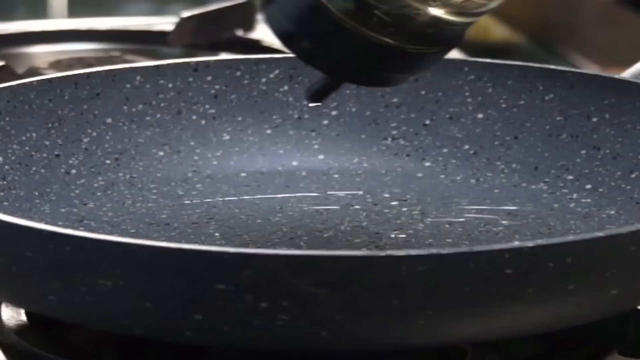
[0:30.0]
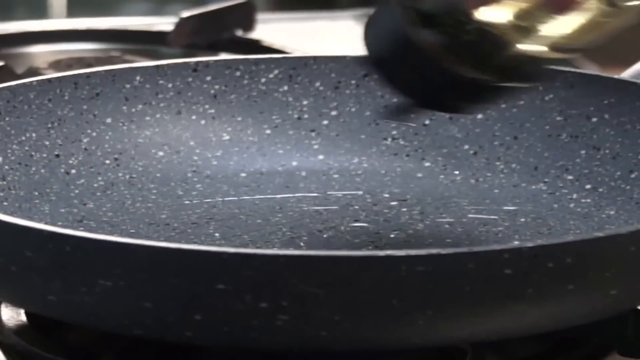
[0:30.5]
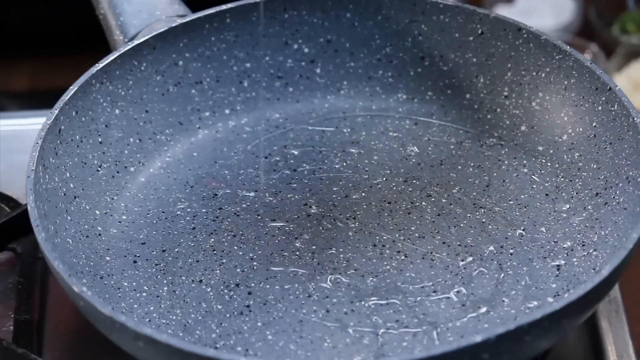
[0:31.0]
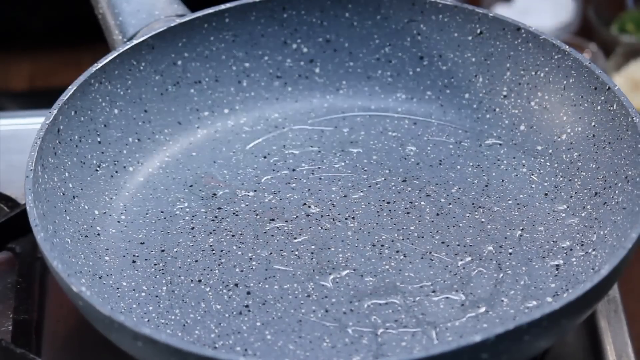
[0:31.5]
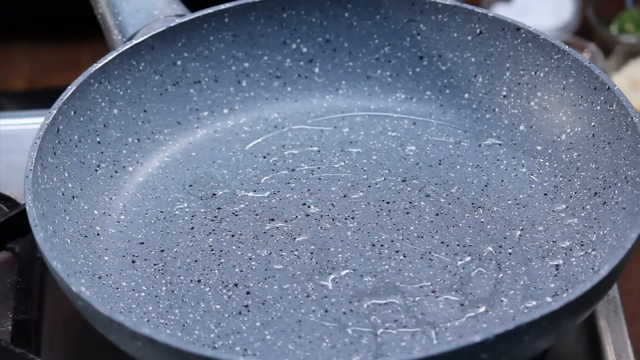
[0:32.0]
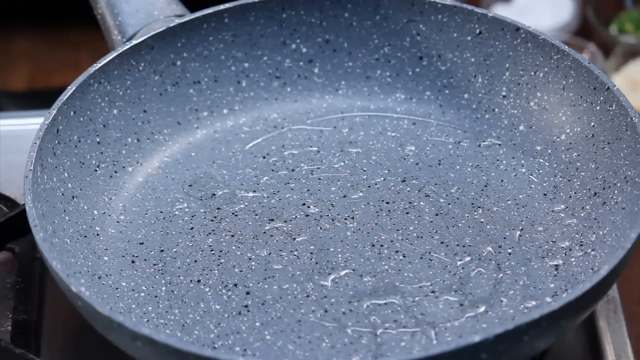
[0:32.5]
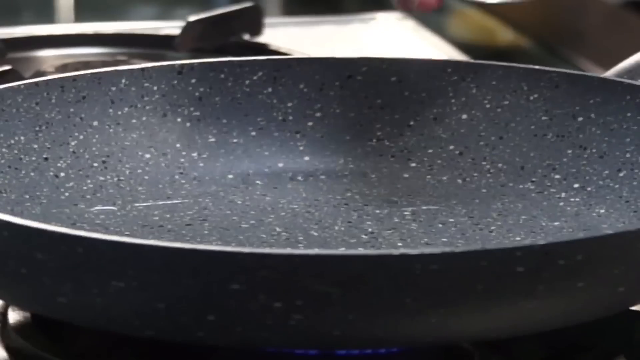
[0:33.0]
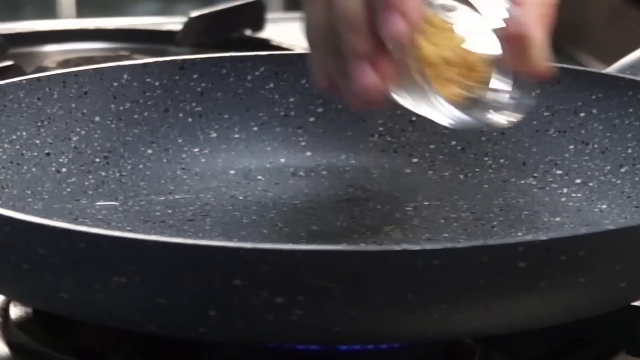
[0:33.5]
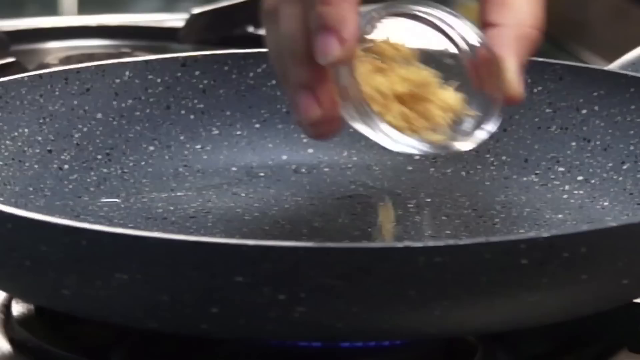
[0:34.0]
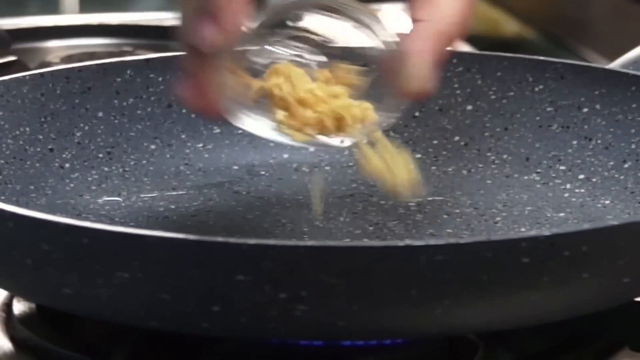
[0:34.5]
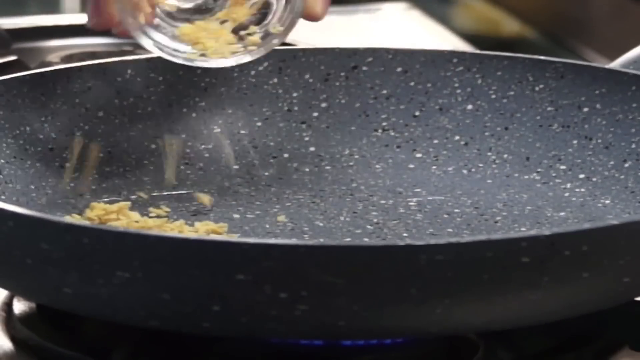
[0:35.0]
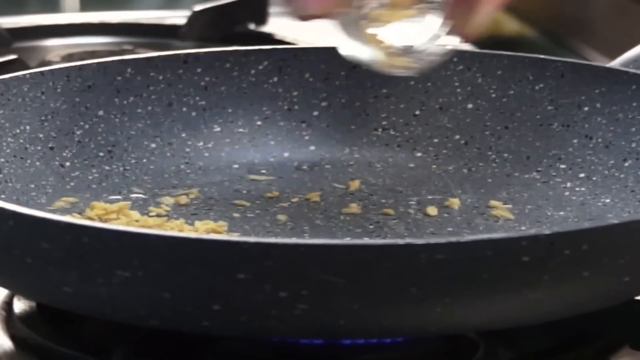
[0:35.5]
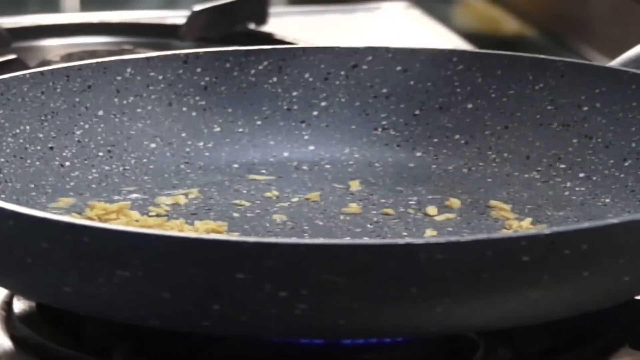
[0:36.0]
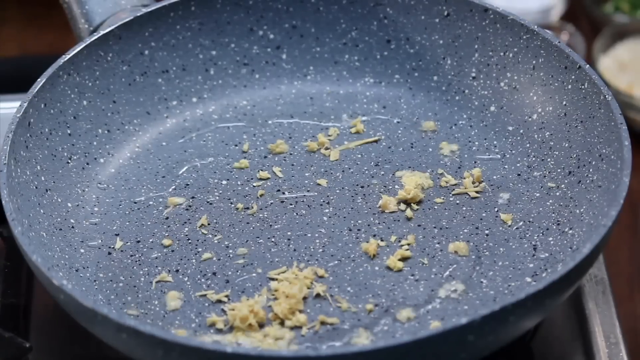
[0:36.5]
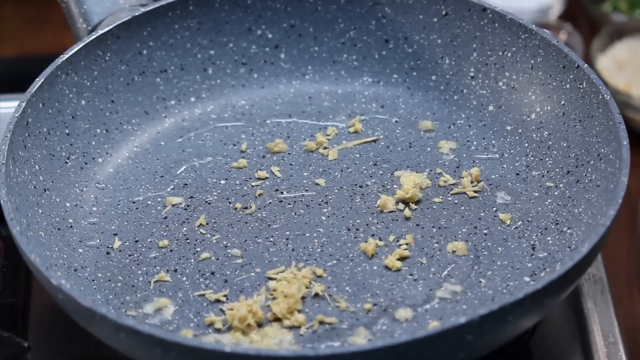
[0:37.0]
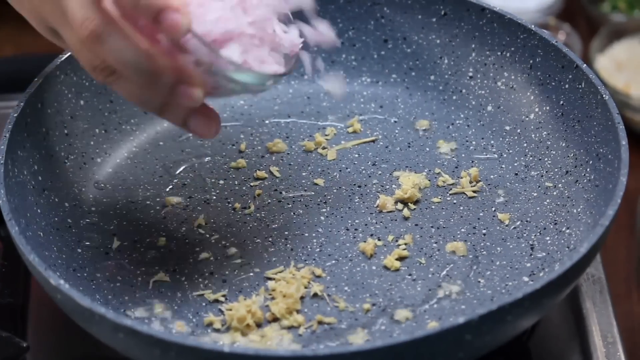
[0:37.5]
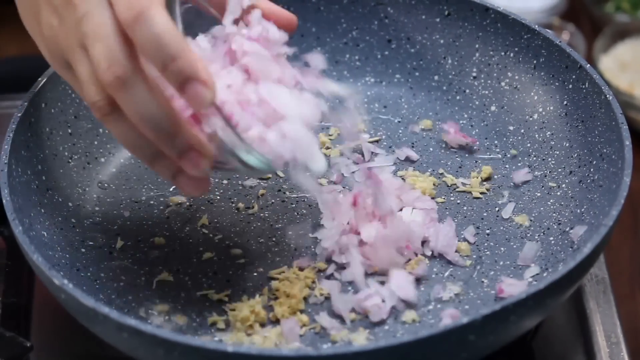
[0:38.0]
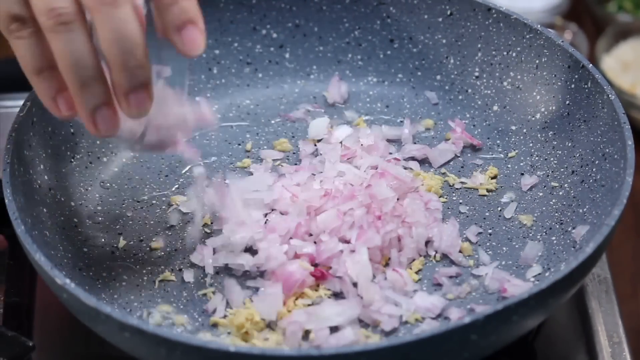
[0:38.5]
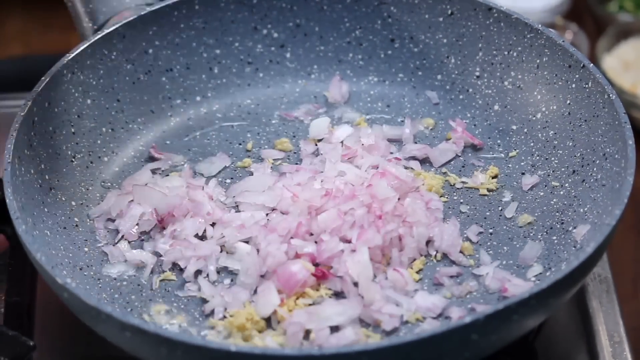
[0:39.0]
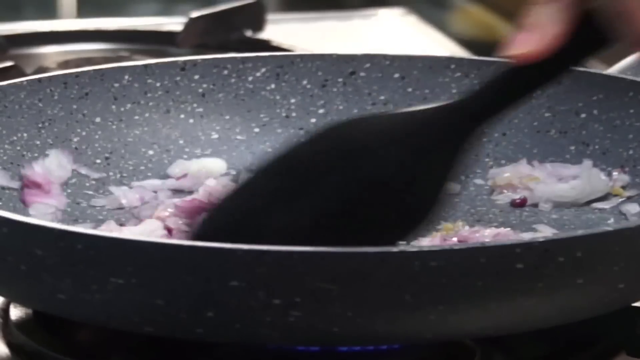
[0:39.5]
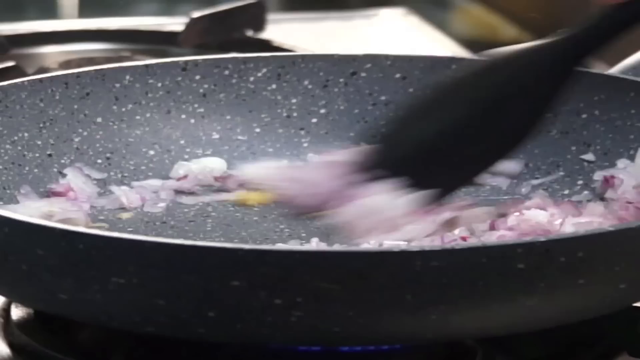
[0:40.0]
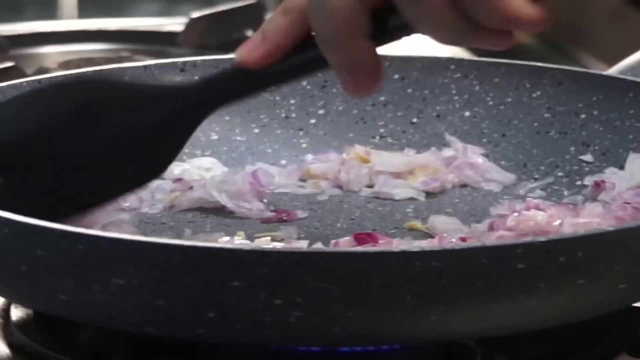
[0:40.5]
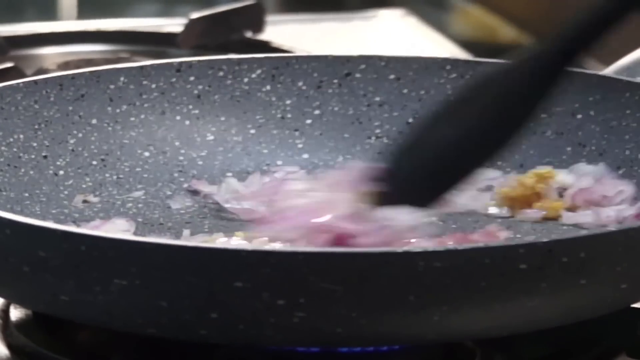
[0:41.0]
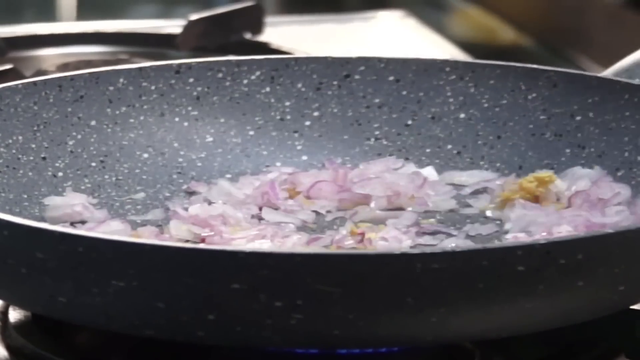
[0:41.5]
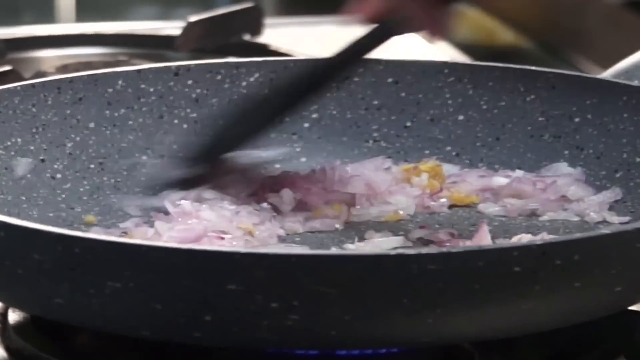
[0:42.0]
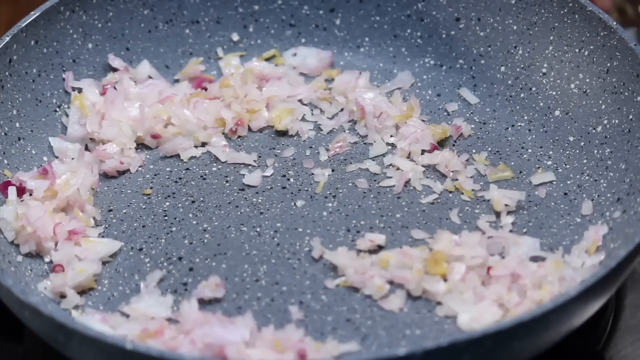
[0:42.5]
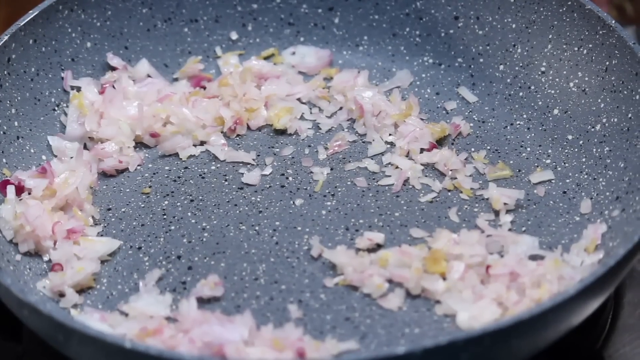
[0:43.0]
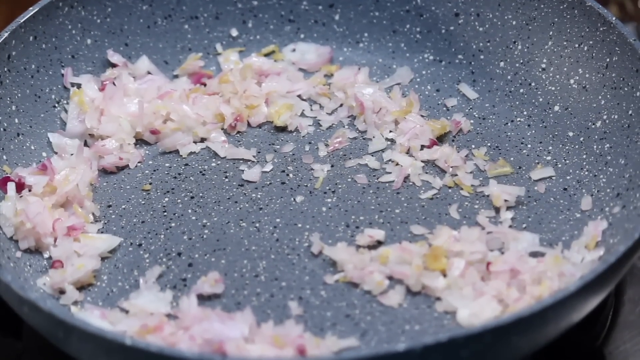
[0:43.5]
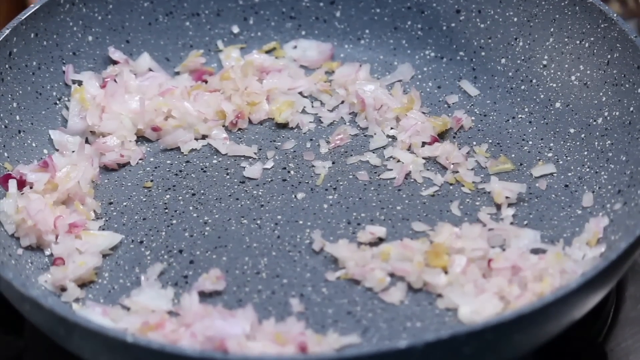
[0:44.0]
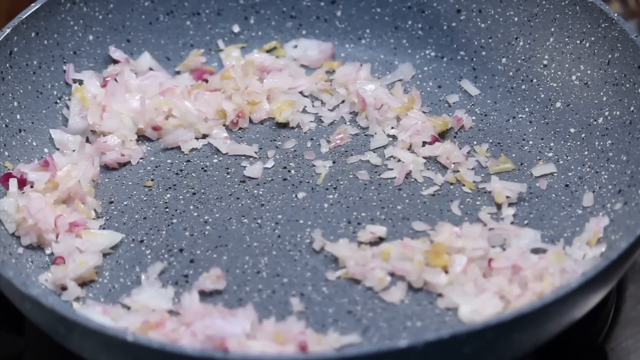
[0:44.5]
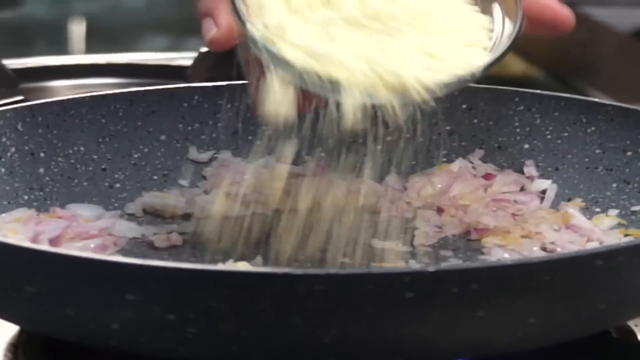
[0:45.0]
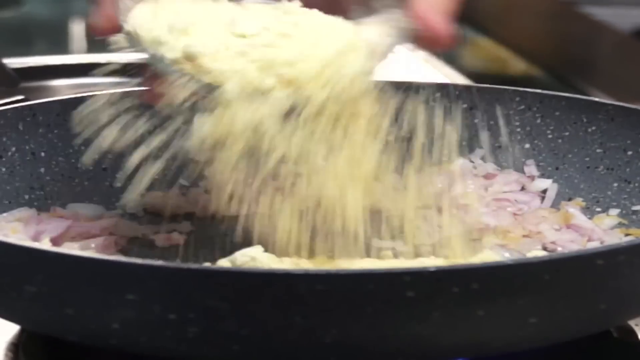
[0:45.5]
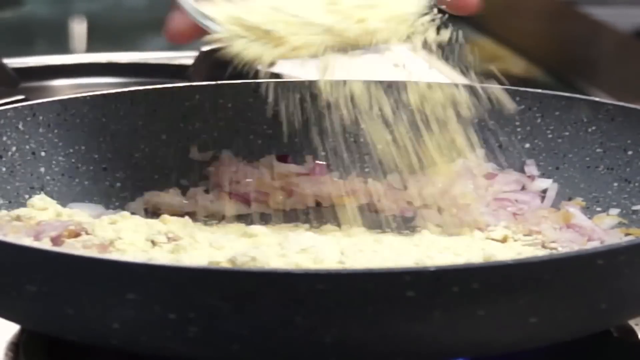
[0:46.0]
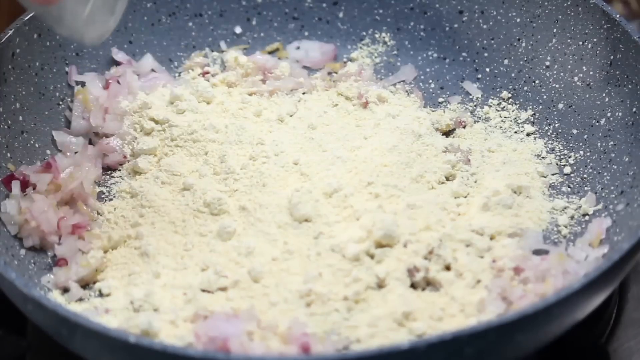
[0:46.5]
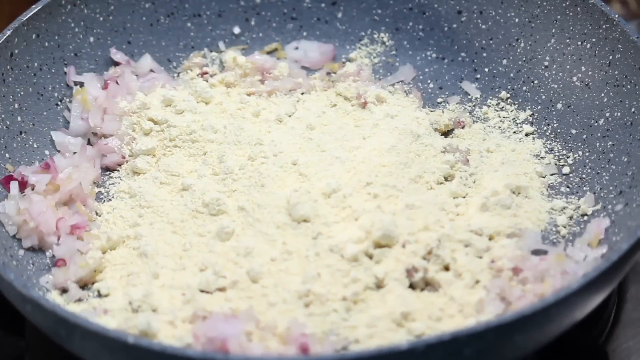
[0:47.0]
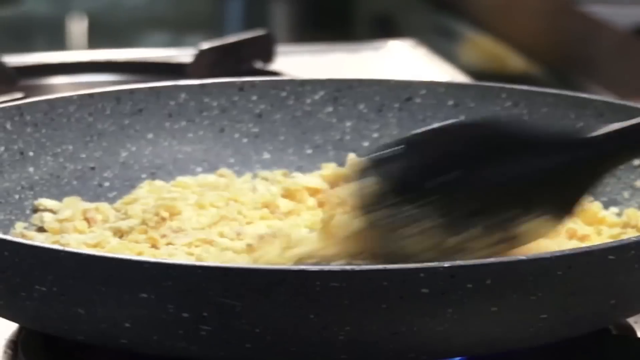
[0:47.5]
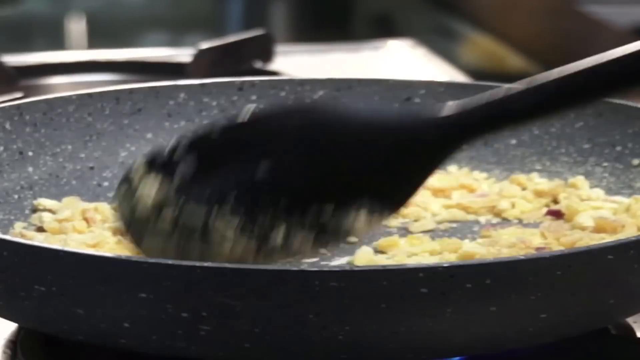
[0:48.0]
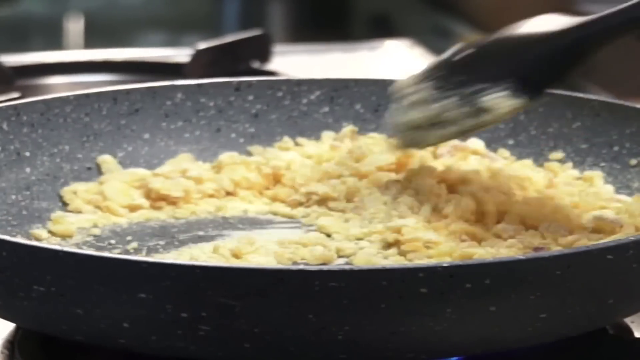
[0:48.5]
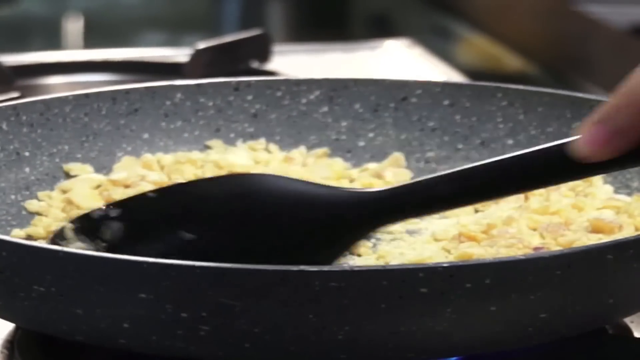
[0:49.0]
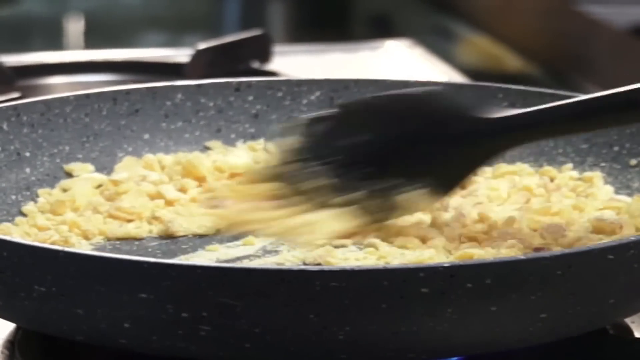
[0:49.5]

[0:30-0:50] A person's hand shakes a tiny glass bowl, adding the onion and the ginger or something similar to the pan. Using a spatula, she mixes it in the pan. She dabs a little oil on and spreads it out before adding the food. She then adds the breadcrumbs, scattering them all over the pan, and mixes them in with the spatula until everything kind of looks yellow. The spatula is black with a longer handle, and her hand is on top of it. The pan is black on the bottom and gray on the top, with white and black speckles. Only the person's fingernails are visible; they are not very long and are unpainted and clear.